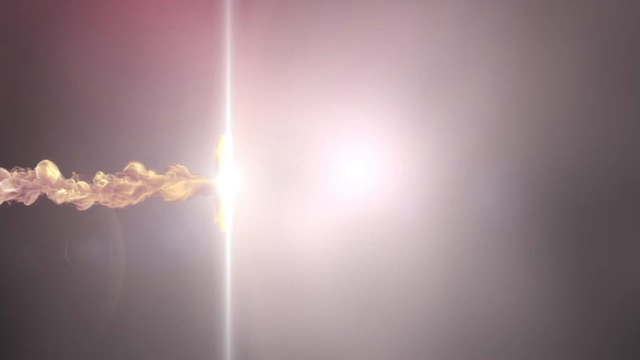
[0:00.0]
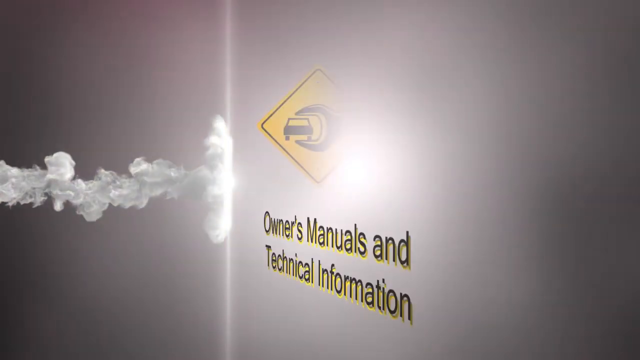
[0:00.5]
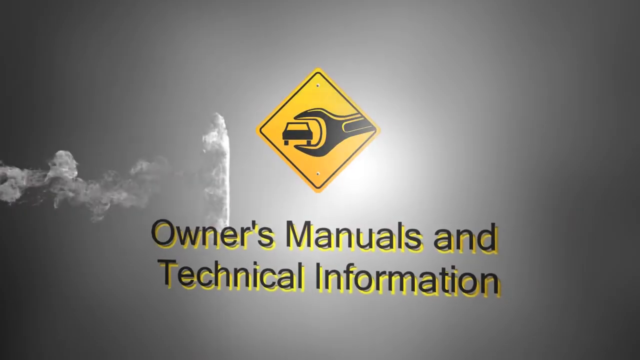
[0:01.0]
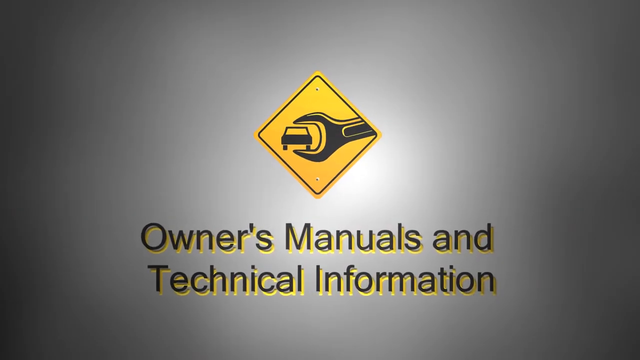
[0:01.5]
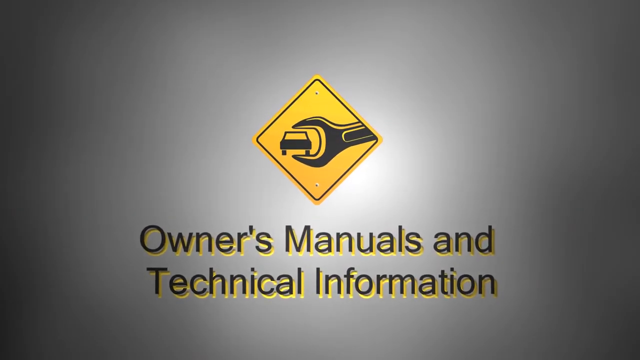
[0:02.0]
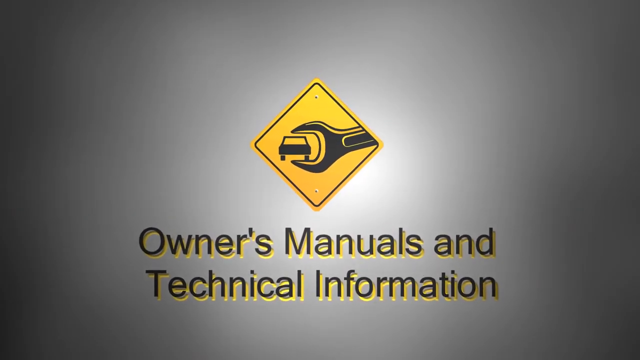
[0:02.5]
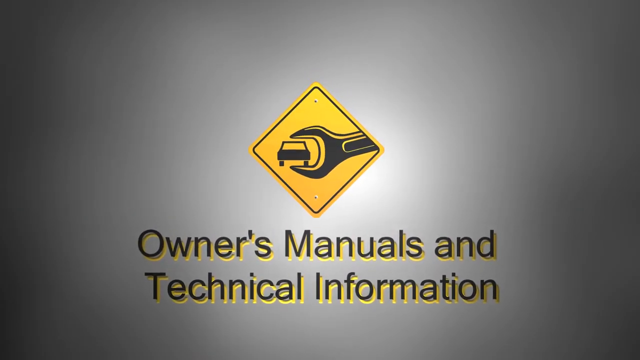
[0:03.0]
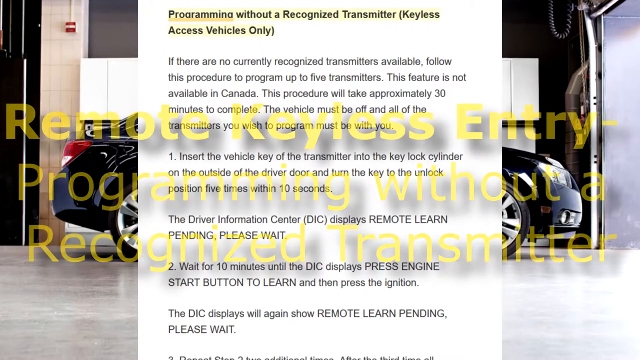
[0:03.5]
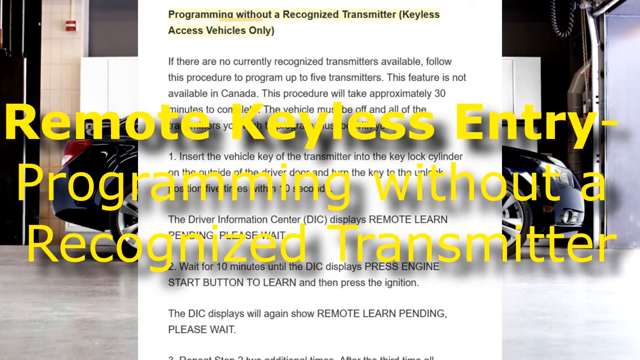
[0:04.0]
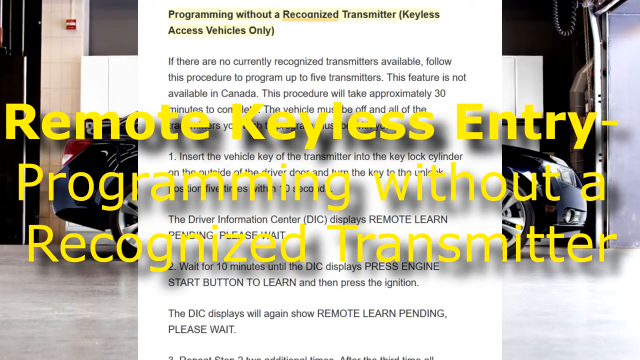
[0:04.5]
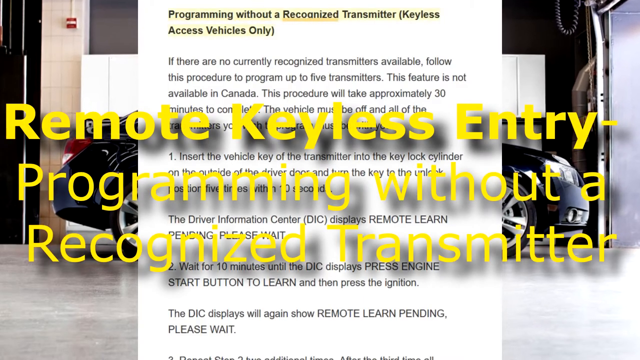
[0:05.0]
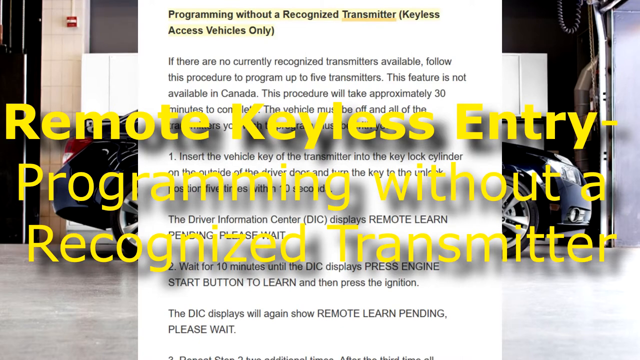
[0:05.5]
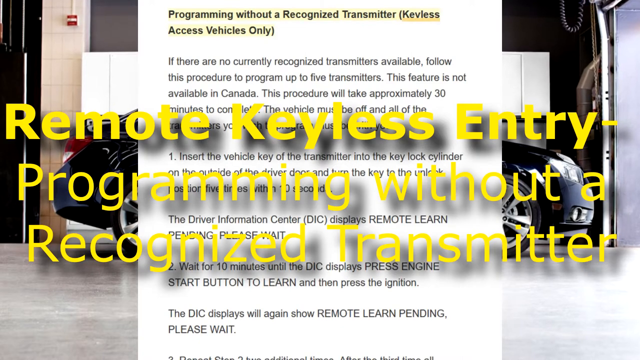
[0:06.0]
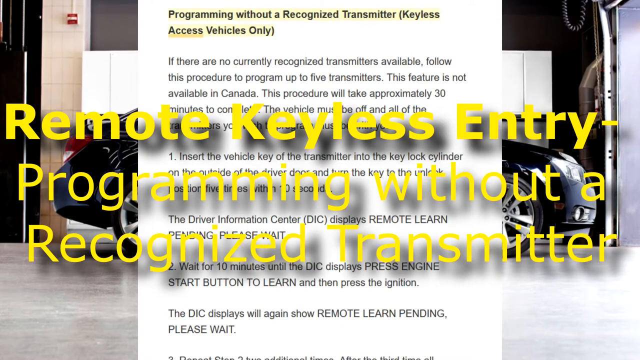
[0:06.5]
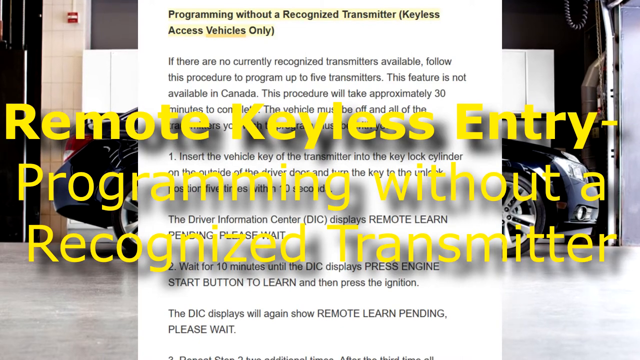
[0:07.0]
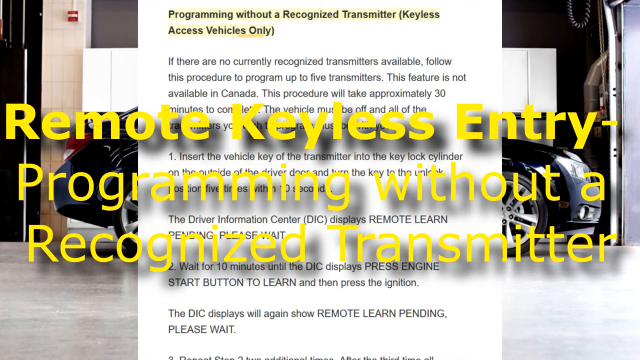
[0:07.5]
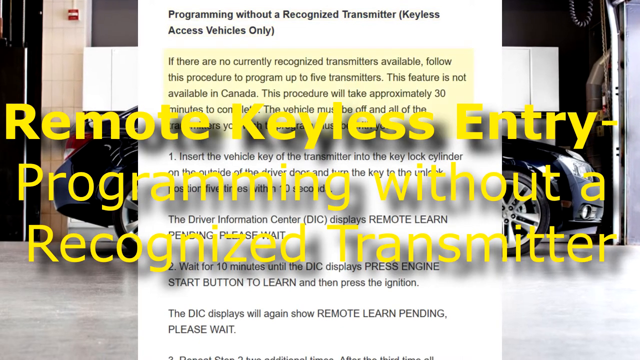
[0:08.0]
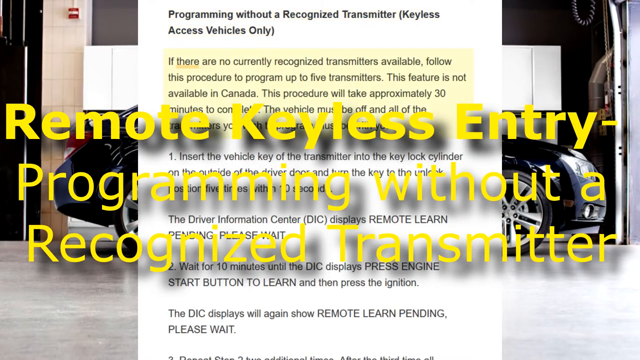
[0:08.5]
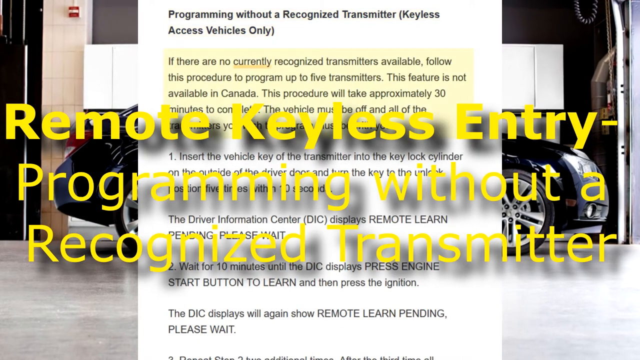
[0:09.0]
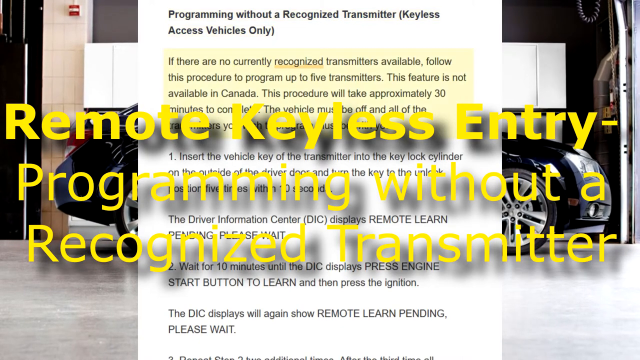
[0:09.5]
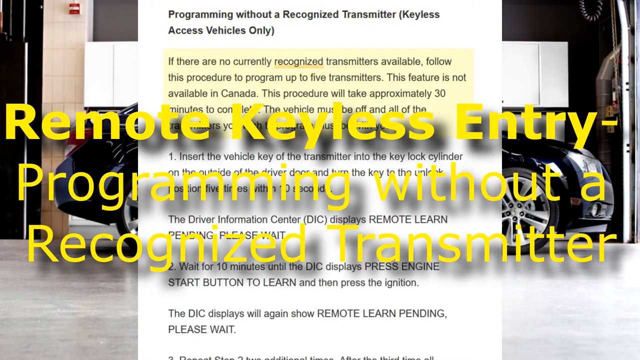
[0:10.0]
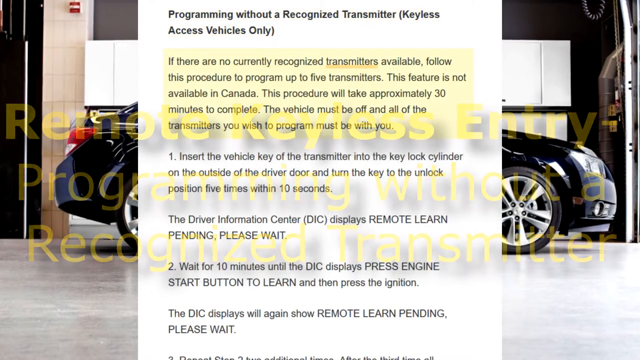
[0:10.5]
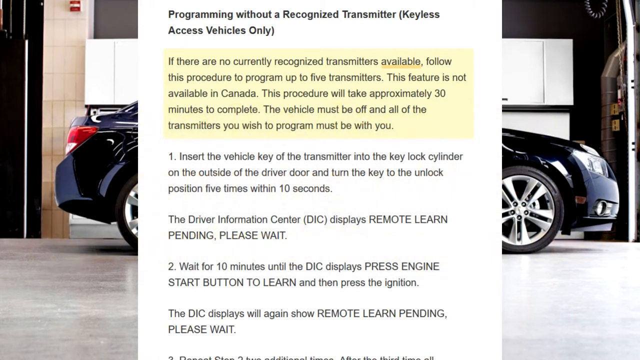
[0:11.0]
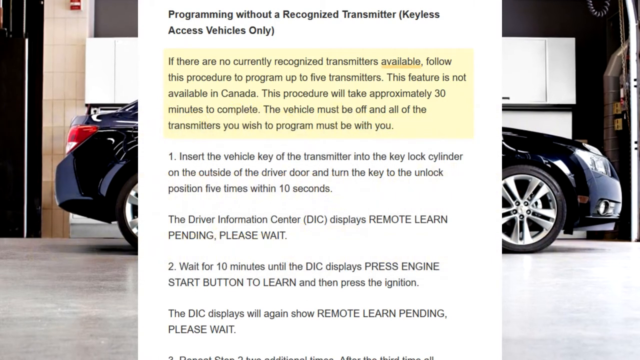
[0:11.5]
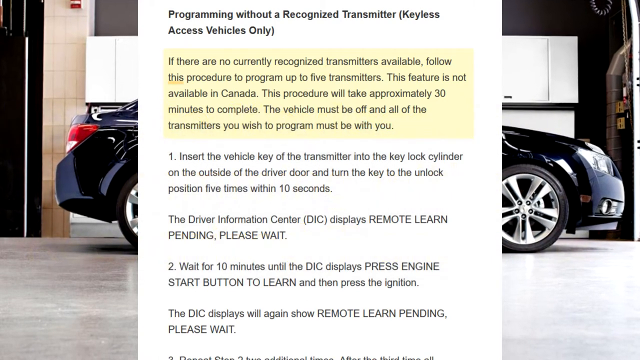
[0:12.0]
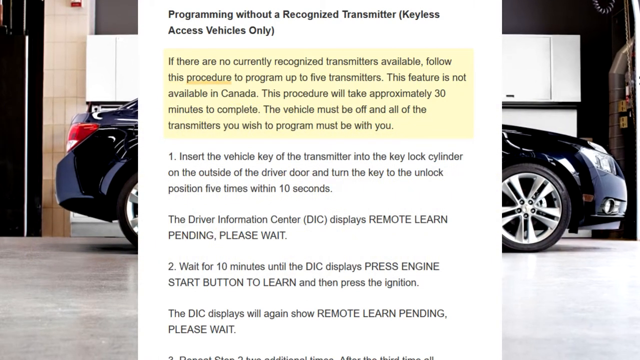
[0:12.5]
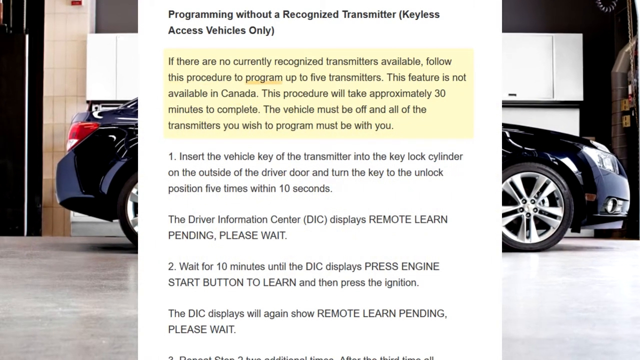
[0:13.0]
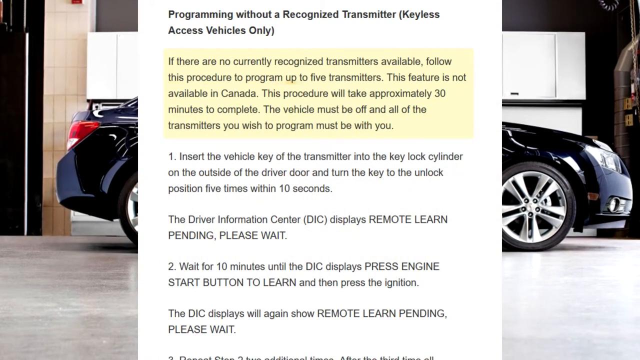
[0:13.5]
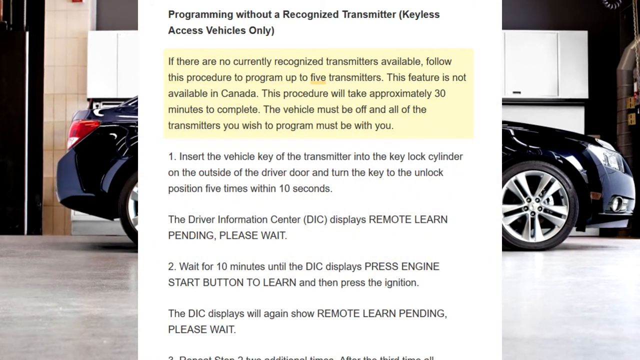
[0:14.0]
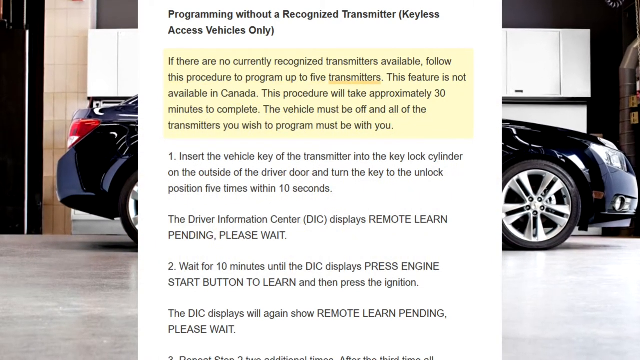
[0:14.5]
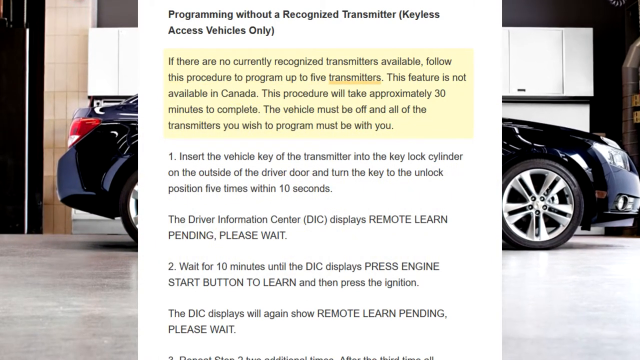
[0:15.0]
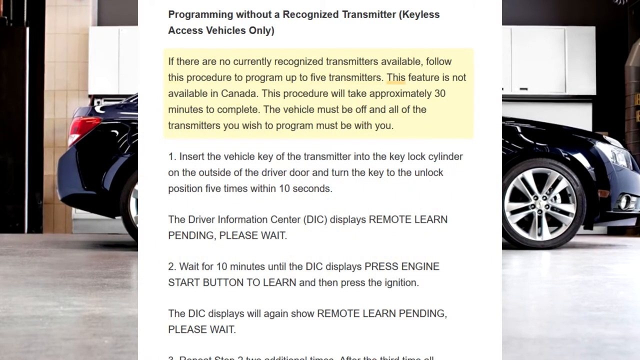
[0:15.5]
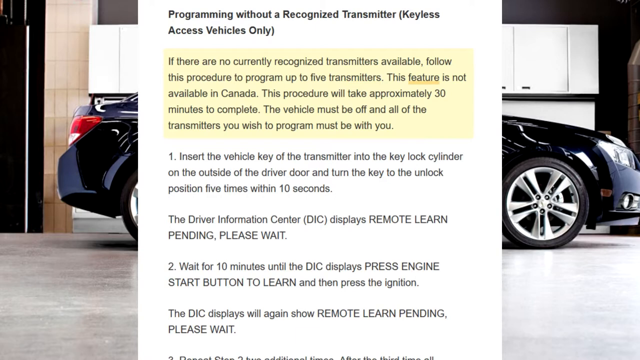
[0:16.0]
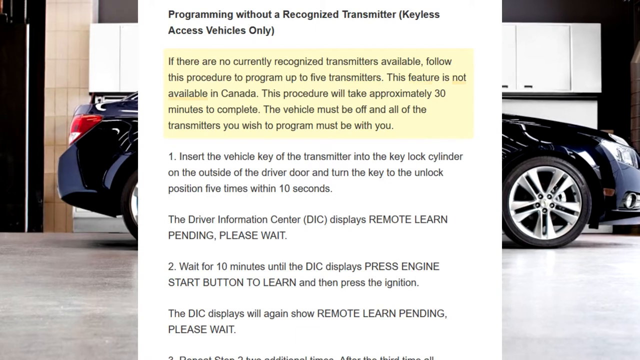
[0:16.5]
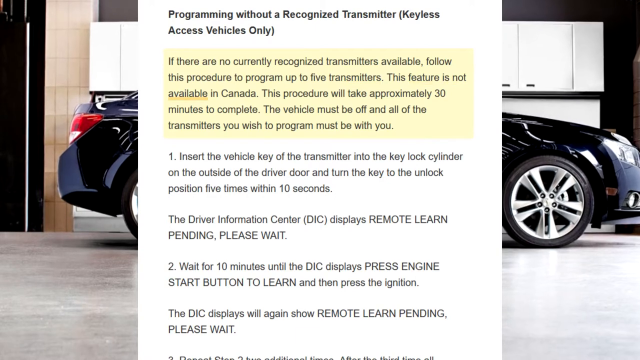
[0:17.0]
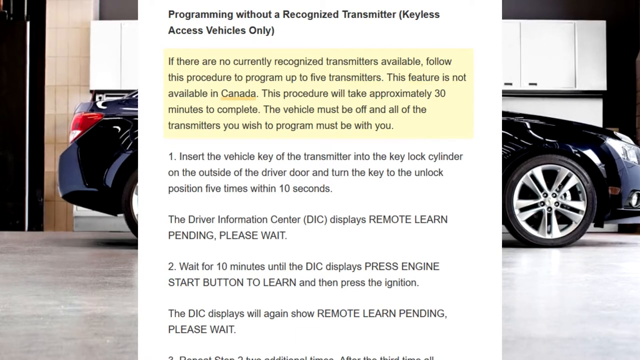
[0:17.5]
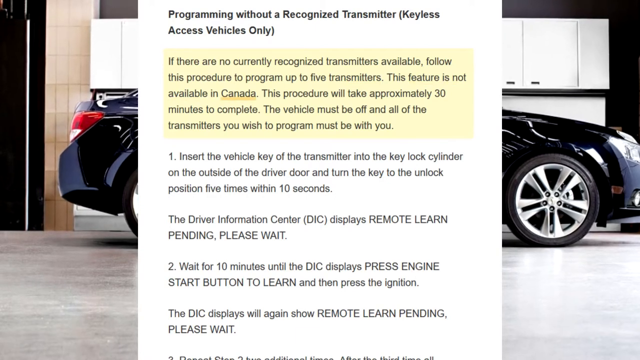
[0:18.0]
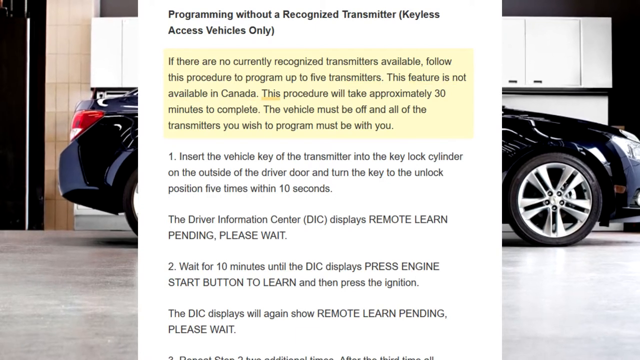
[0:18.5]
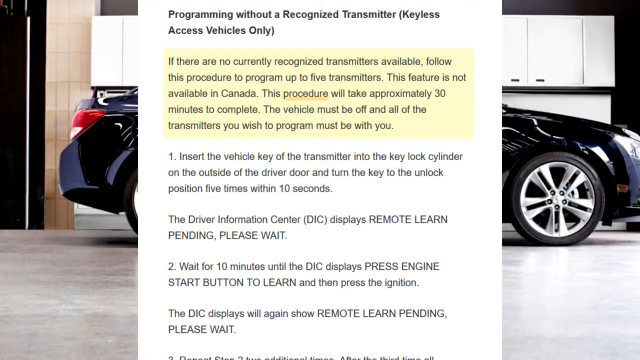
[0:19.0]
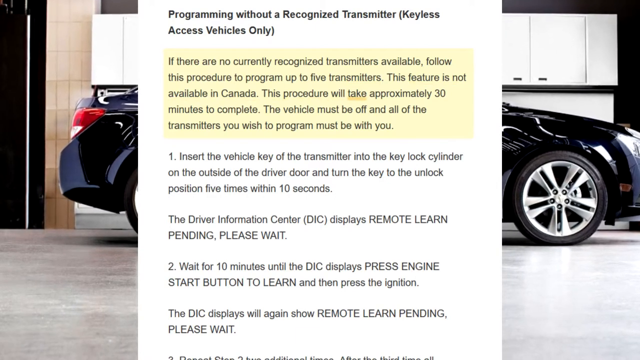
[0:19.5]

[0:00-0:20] The video opens on a gray background with a little of what looks like smoke coming in from the left center and reaching about a third of the way across, and a light running all the way up and down. That moves away and a street sign appears: it is yellow in the center with a car on it, and to the right of the car a big wrench comes down, its open part above and below the car. Below it, in black with sort of yellow borders, it says "owner's manual and technical information." That goes away, revealing a black car in the background inside a garage, its rear end on the left and its front on the right. A white paper covers the top of the car from about the middle of the back tire to the middle of the front tire. It says "programming without a recognized transmitter, keyless access vehicles only," followed by a whole page of information, and overlaid in yellow across all of it is "remote keyless entry programming without a recognized transmitter." On the paper, "transmitter," "keyless," and "vehicles only" are underlined in yellow. The first paragraph is then highlighted in yellow, and starting with the first word, each word is underlined in turn: a word is underlined, the line goes away, and it moves to the next word. As a red overlay goes off, the camera moves barely to the left as the underlining continues.